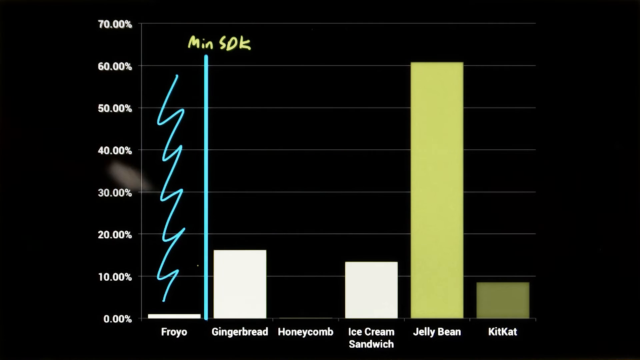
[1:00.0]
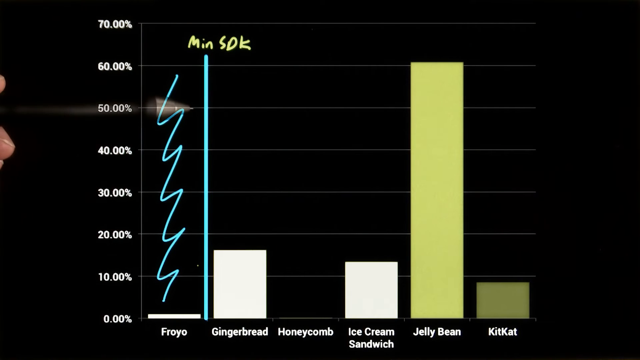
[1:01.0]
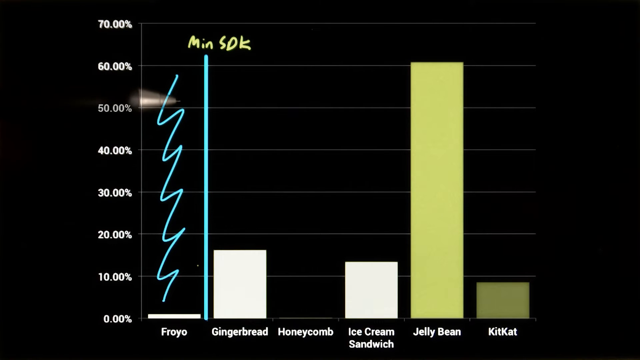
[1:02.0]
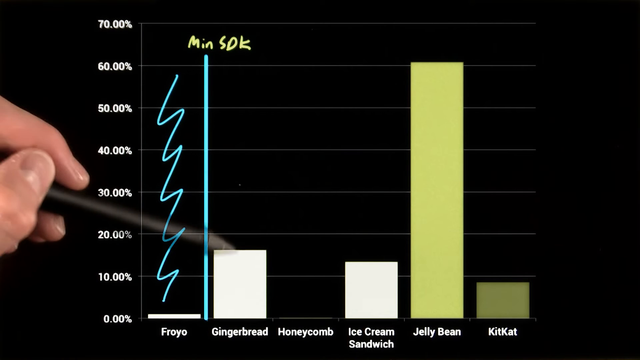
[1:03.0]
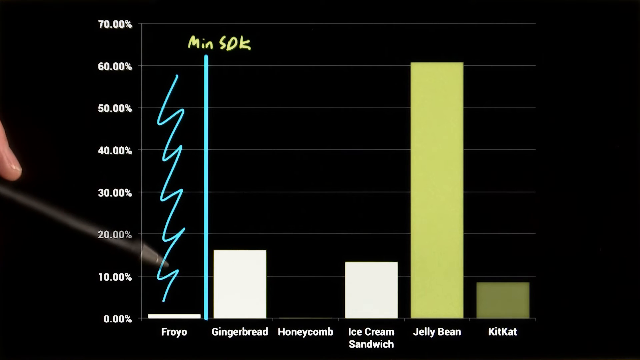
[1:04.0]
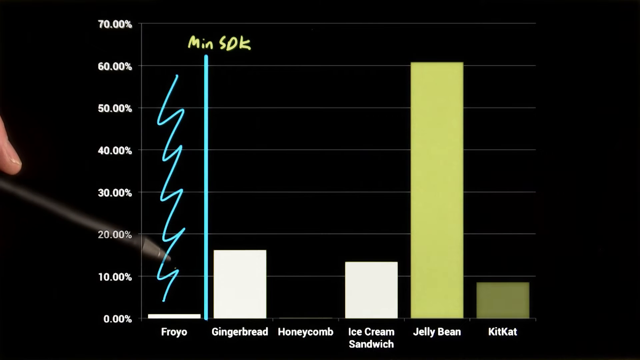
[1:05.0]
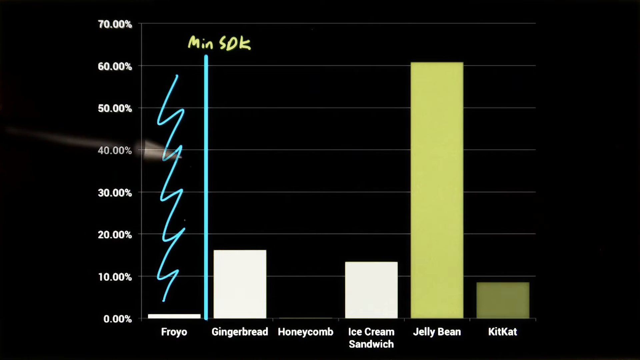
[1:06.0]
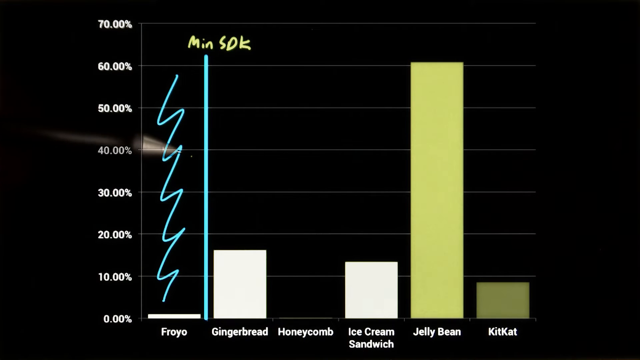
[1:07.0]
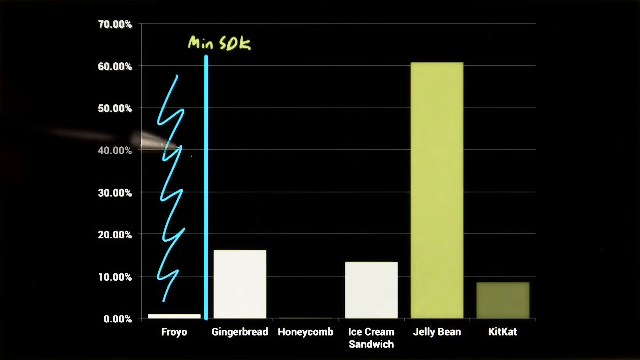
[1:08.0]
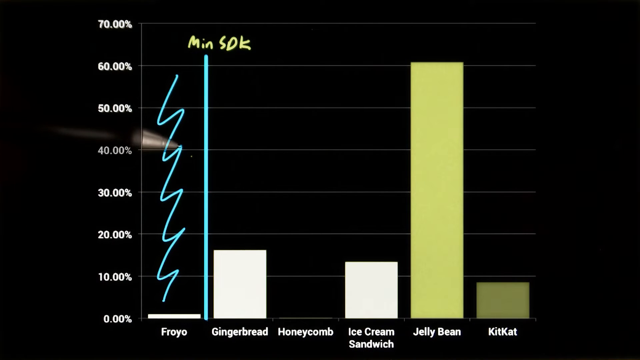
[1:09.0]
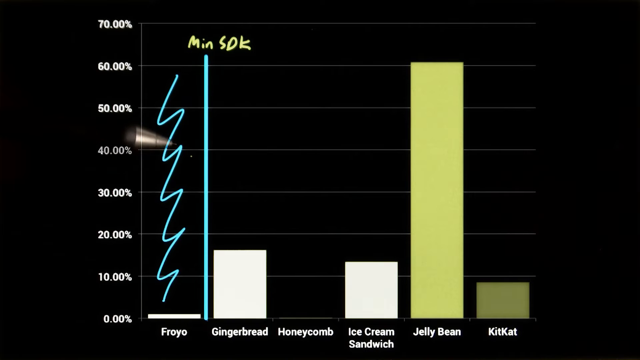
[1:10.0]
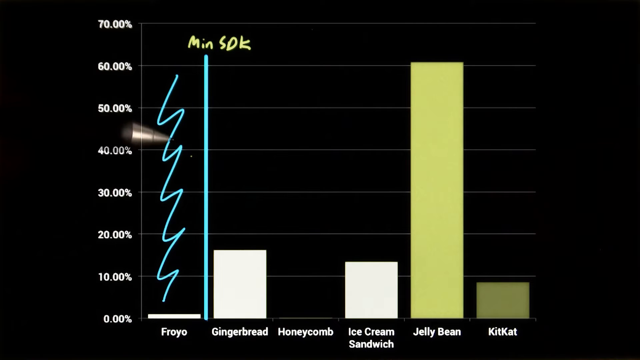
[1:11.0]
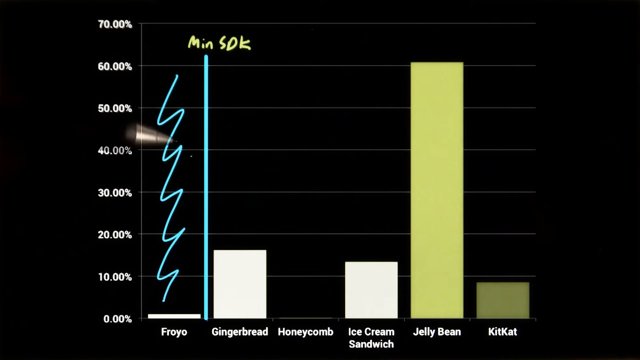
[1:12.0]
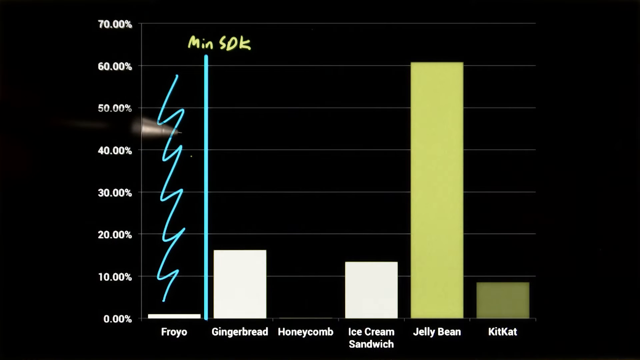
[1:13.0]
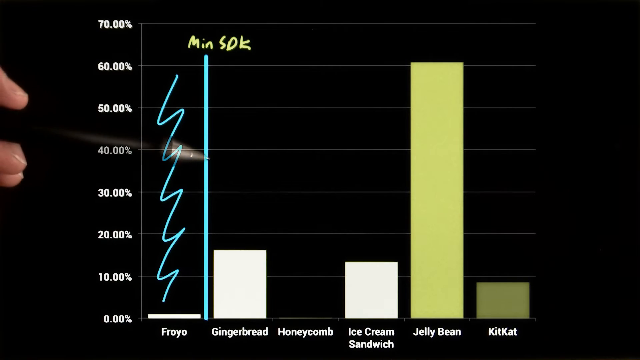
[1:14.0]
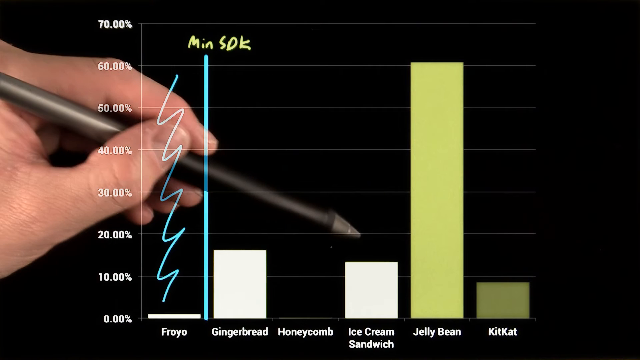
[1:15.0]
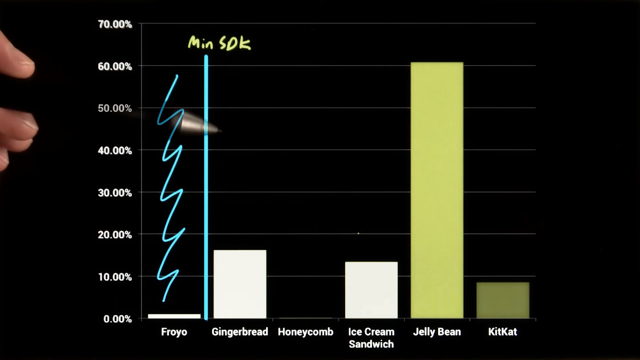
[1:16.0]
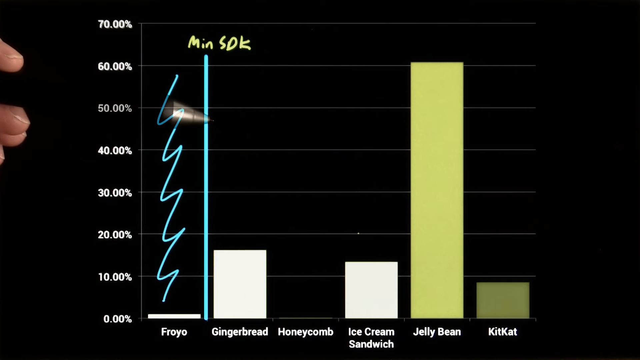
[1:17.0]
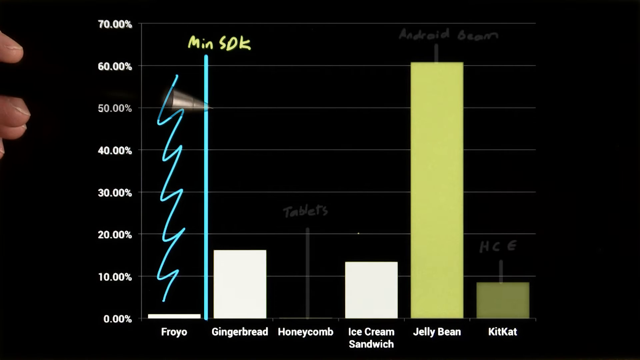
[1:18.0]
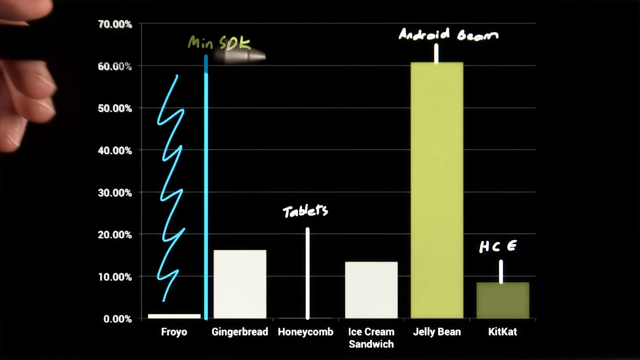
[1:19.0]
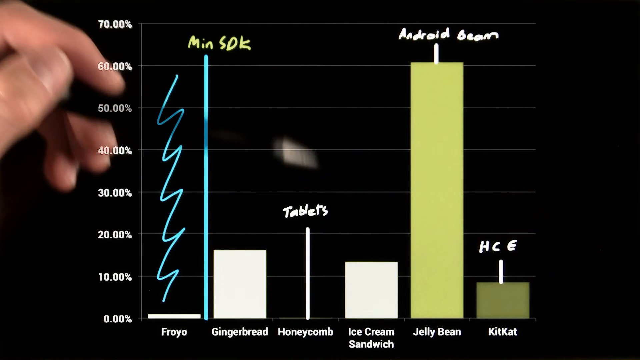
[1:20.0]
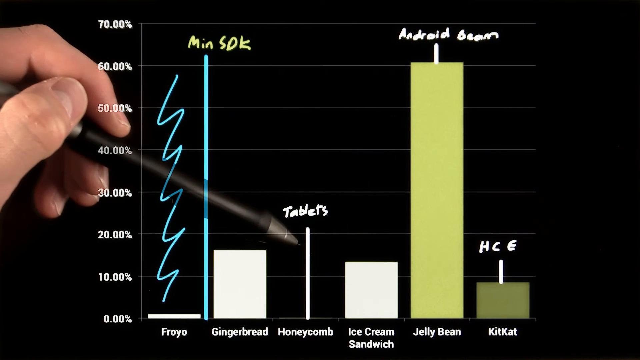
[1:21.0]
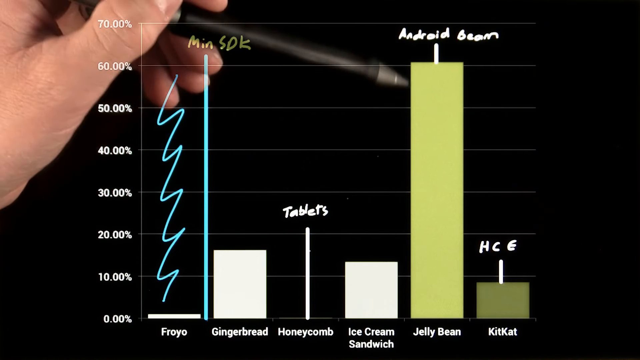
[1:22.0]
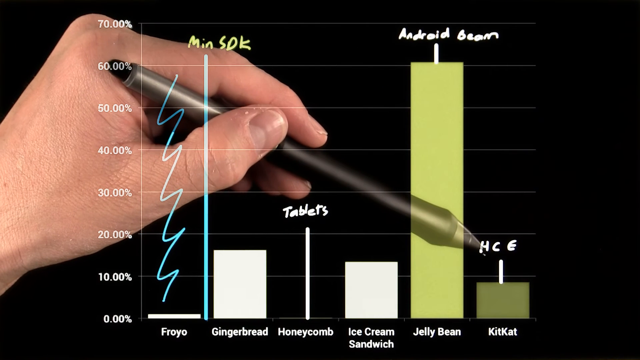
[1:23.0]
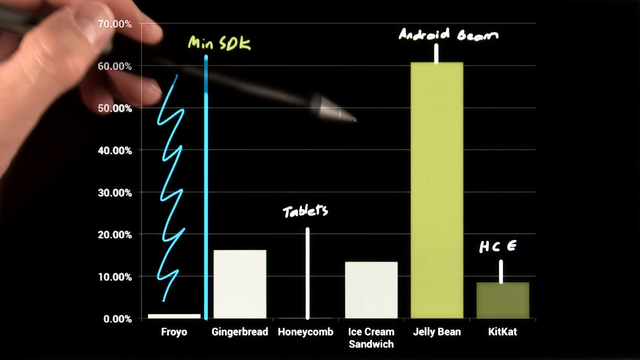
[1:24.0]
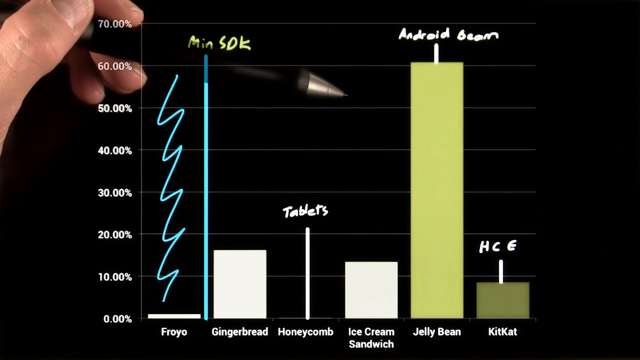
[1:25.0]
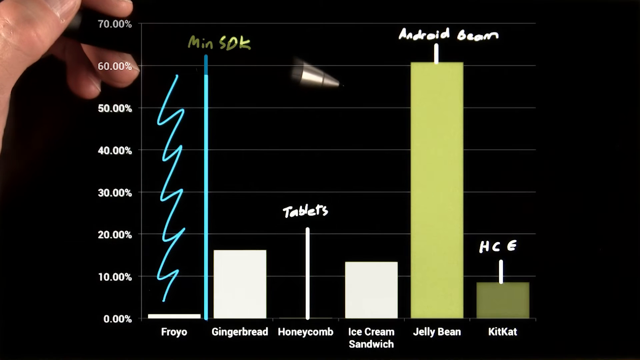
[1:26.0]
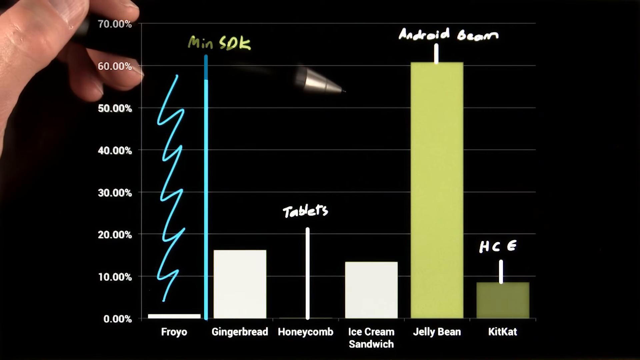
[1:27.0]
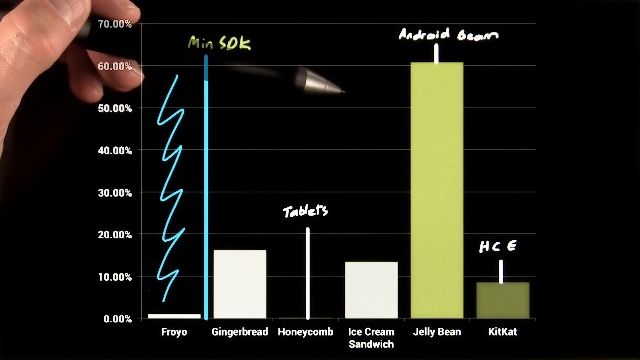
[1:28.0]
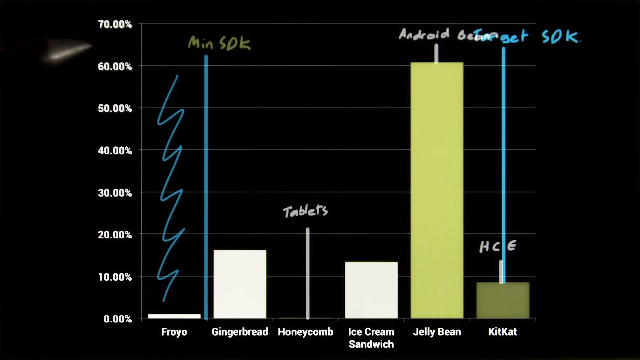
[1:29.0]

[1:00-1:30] The pen in the hand emerges from the left-hand side of the screen, moves towards the center and back again, then points to the vertical pale blue line at around the 50% line. It stays there before moving down to touch around the top of gingerbread, then moves back to the other side of the blue line to settle on the squiggly line and move up it at various points. It settles just above the 40% level for a little while, then moves further along the screen to touch 20% just above ice cream sandwich. It goes back to the 50% mark on the pale blue line before moving back down towards the honeycomb area, where there is now a white vertical line from the bottom, at the honeycomb text, stopping around the 20% area, with the word "tablets" at its top. Above the light green jellybean bar, which goes up to around the 60% mark, is a vertical white bar with the text "Android Beam" above it. Above KitKat, a vertical bar points out of it, with "HCE" above. He moves the nib of the pen from tablets to Jelly Bean to the text above KitKat before settling it around the 60% bar above Ice Cream Sandwich.